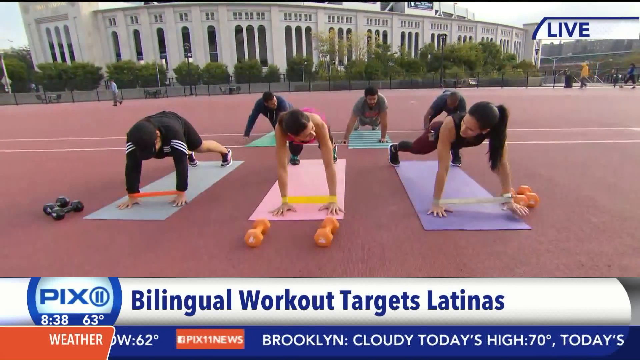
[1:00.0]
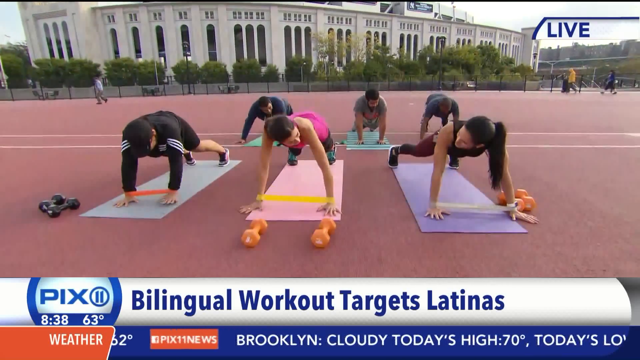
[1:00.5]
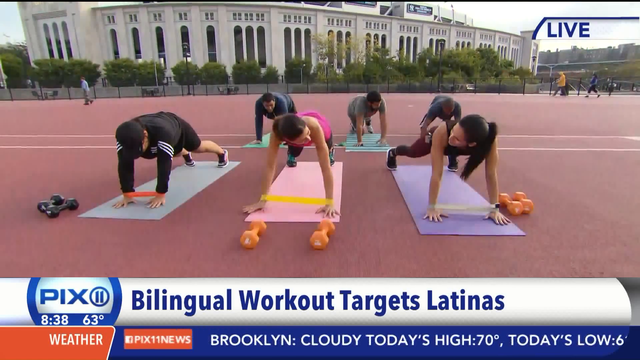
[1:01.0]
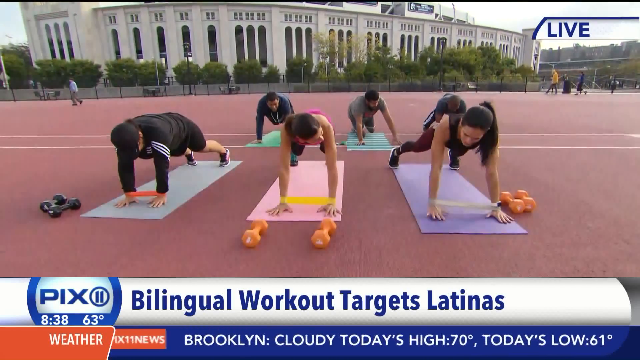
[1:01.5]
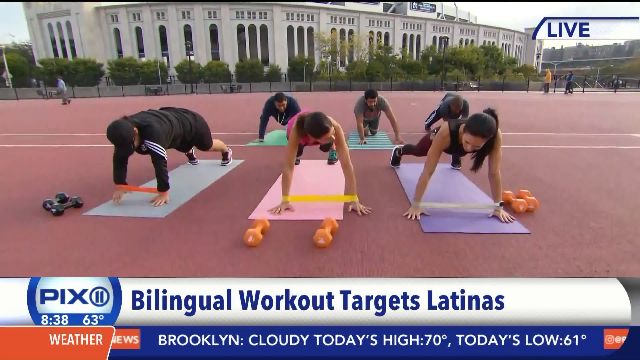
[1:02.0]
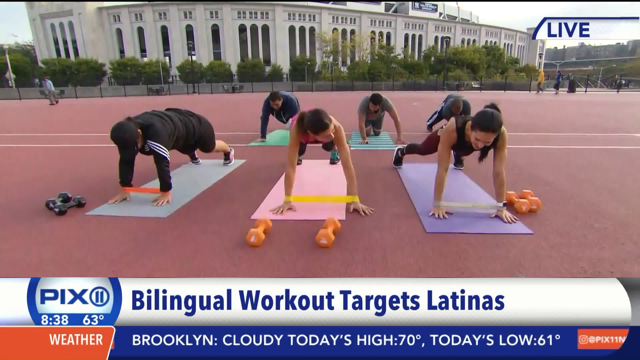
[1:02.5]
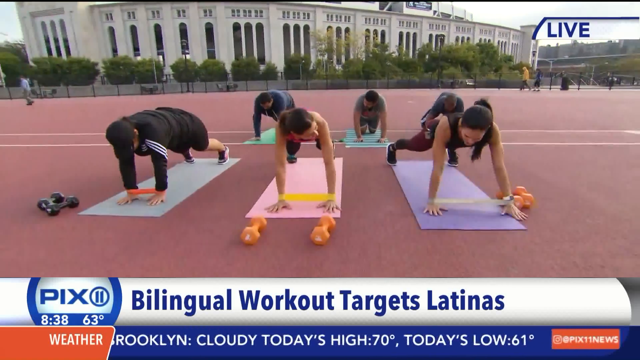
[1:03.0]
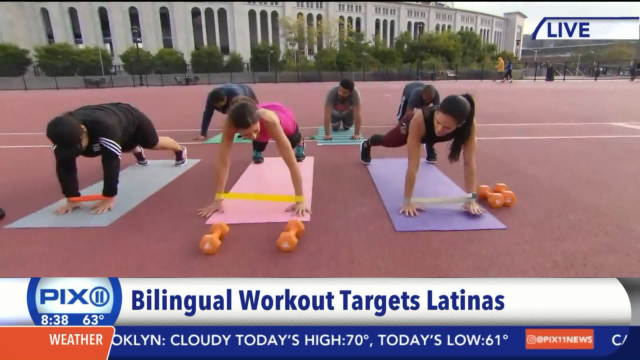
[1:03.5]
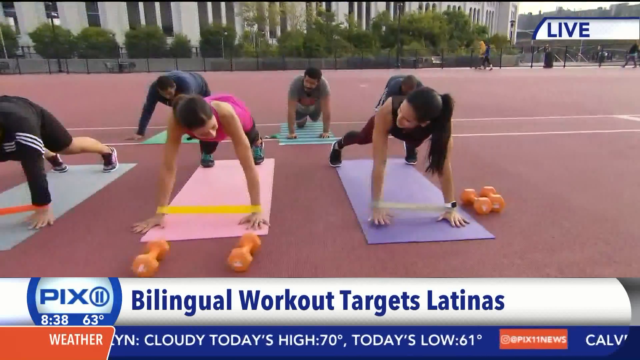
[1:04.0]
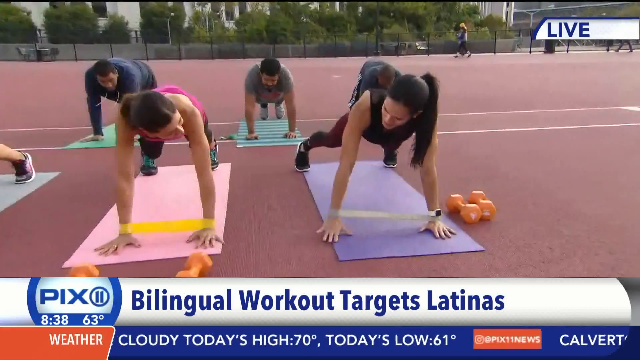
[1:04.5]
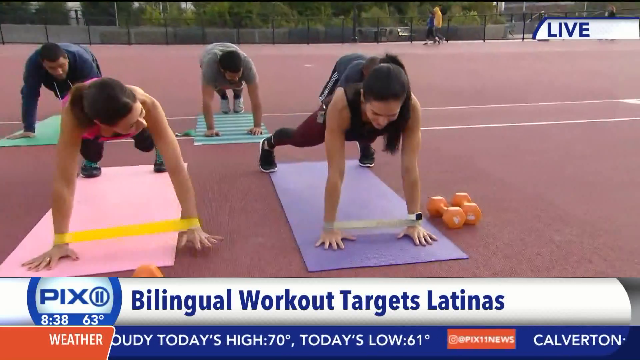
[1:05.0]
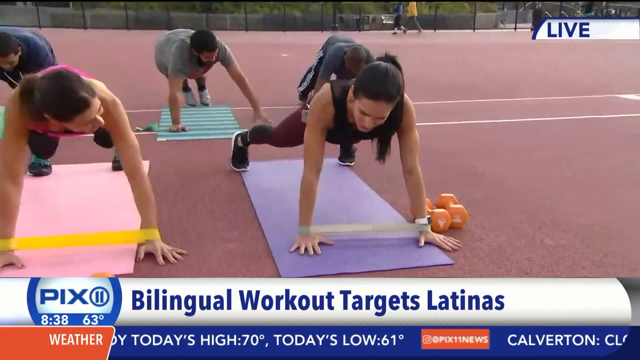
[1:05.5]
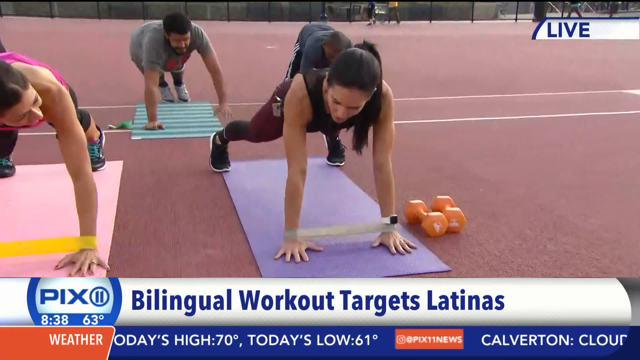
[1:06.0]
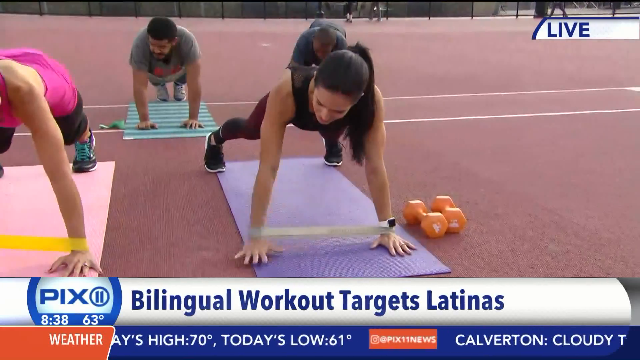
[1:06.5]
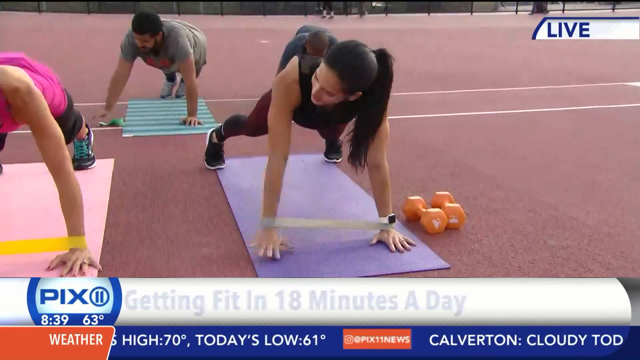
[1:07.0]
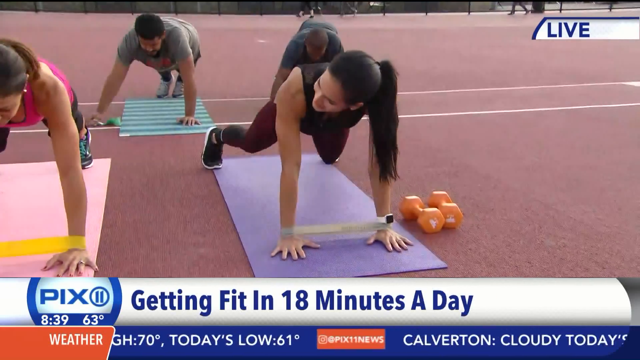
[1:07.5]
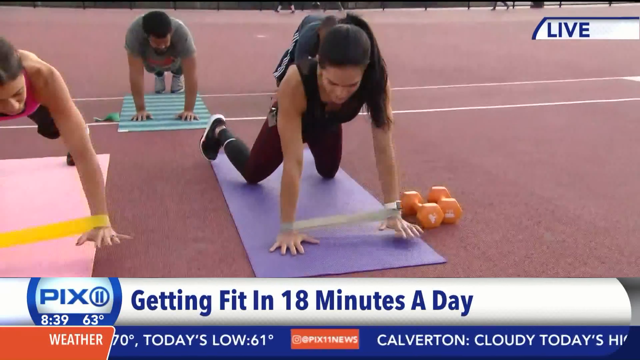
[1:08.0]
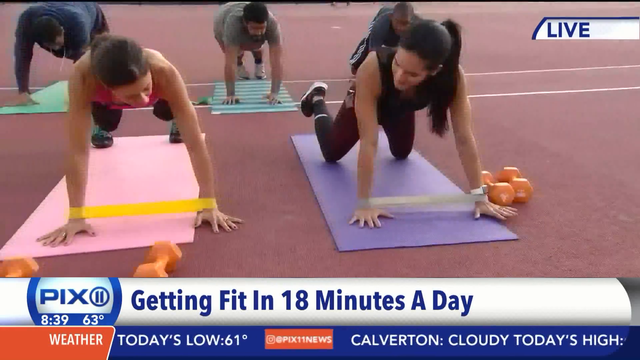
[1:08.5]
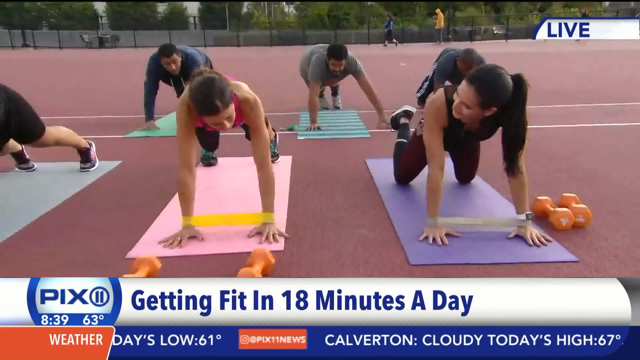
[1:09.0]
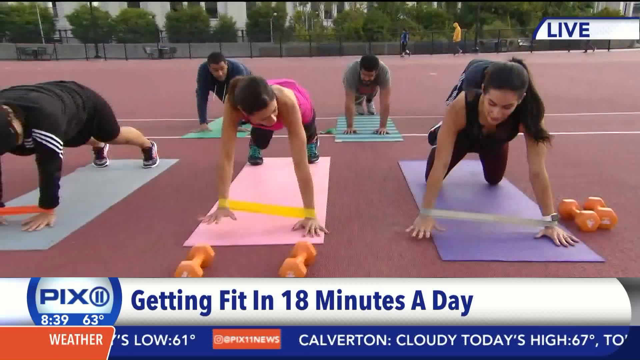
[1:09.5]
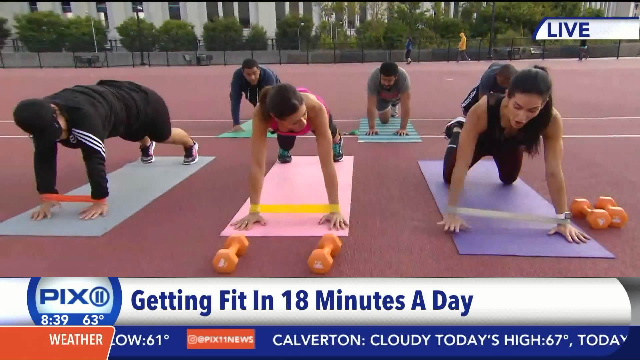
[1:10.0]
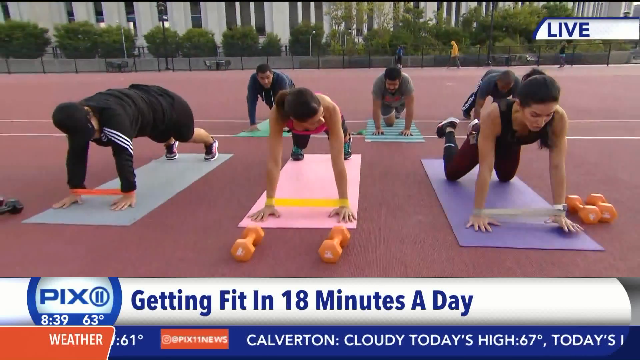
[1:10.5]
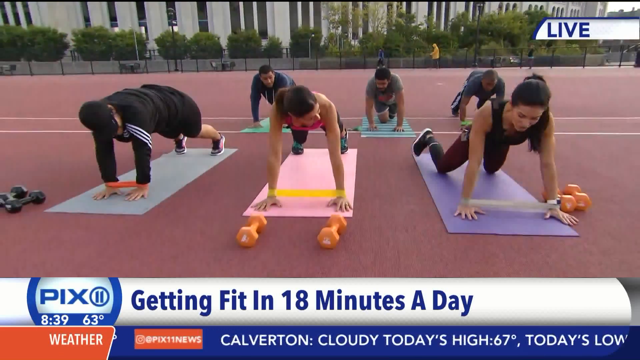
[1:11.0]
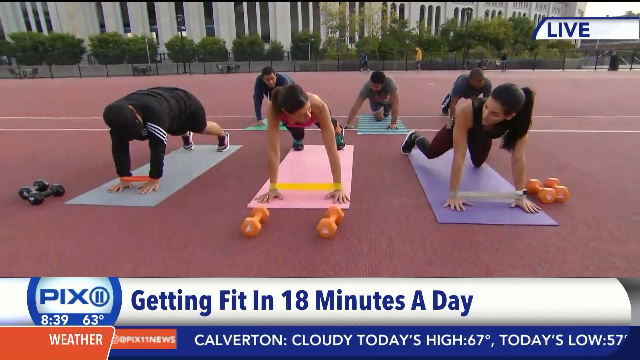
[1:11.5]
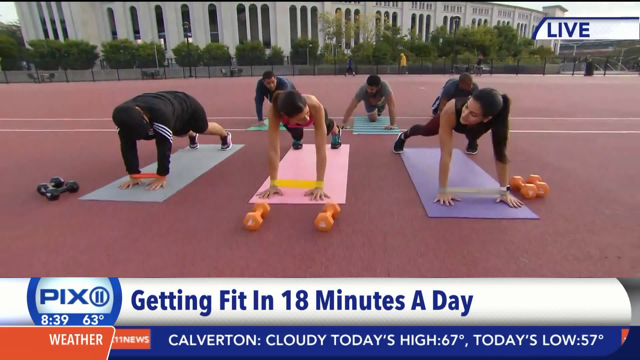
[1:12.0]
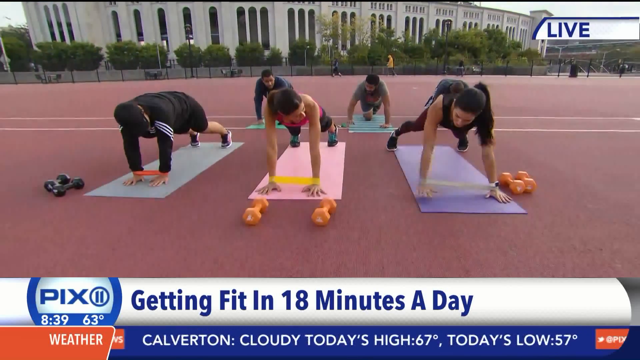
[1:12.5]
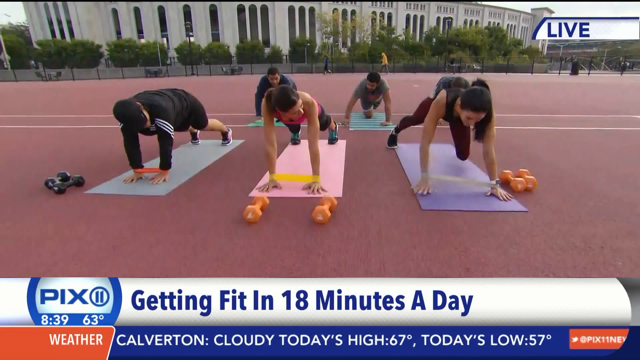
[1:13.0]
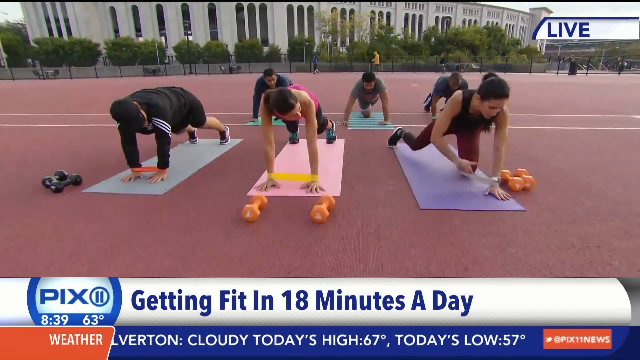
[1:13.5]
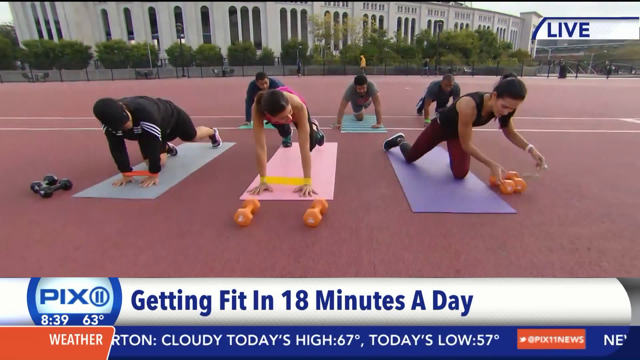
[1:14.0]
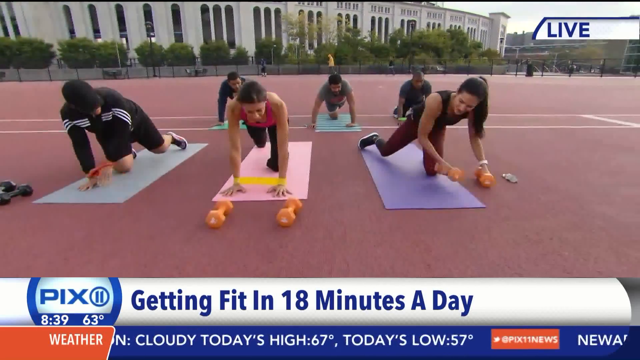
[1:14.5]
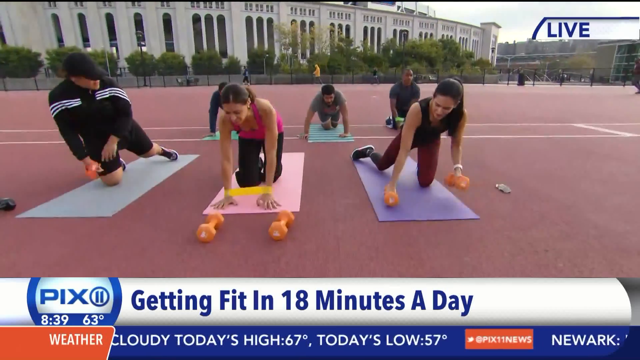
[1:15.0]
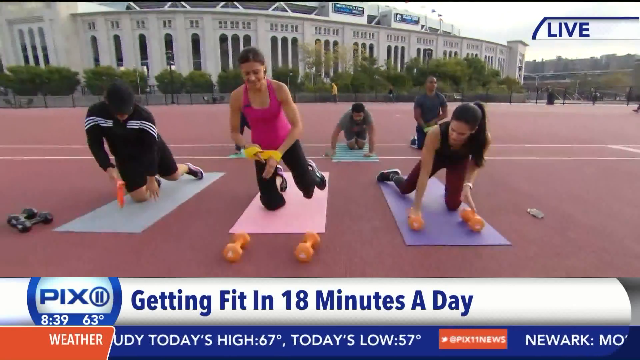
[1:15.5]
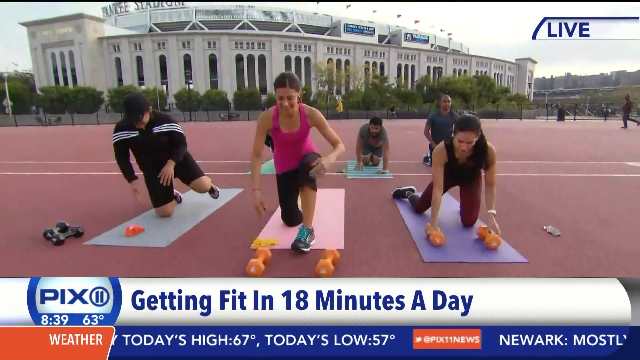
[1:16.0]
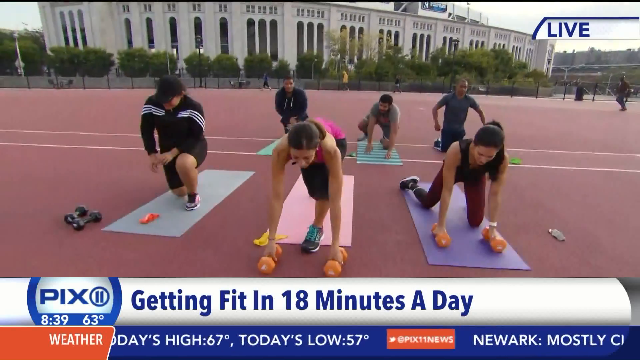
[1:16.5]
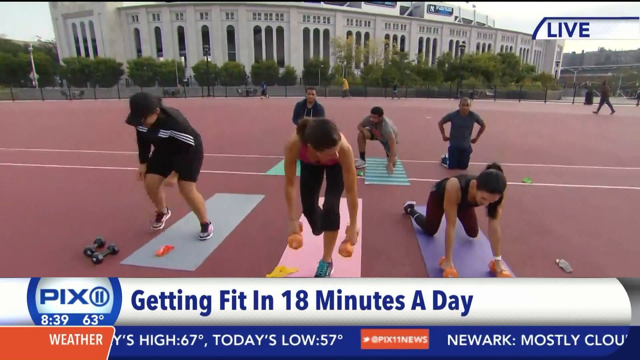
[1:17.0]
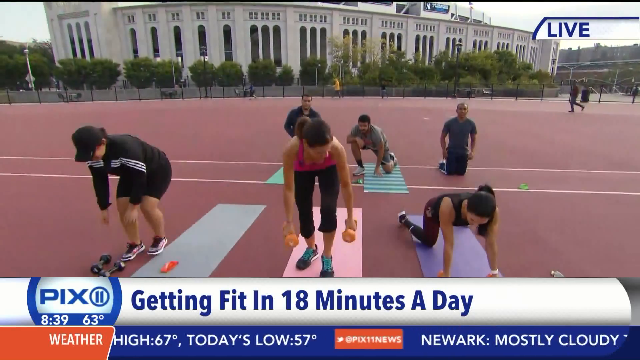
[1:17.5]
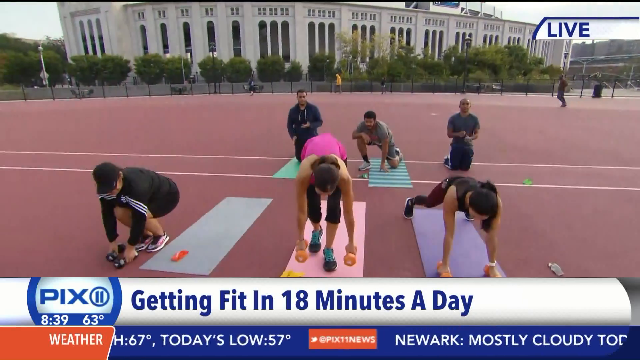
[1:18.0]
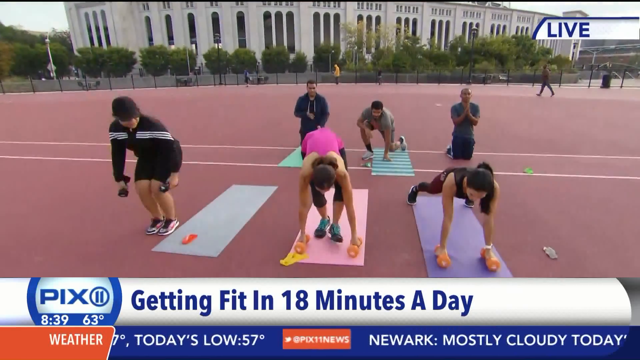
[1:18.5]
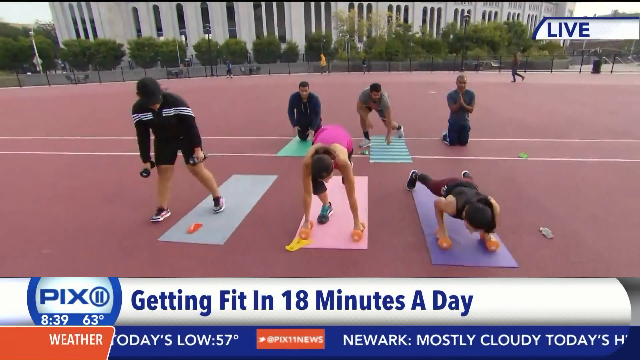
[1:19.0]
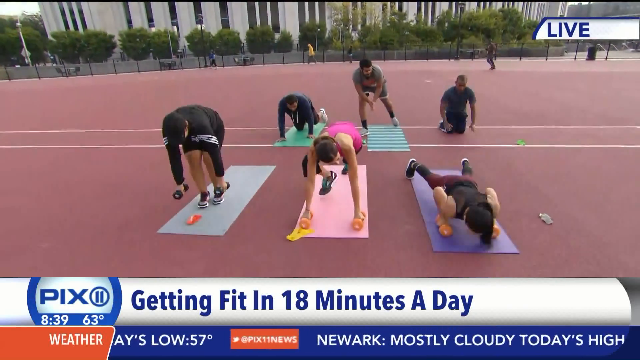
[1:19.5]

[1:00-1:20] Elisa and her companions continue, with the camera focused on her companion on the left. They do bending exercises using elastic bands of different colors, moving the bands from right to left. The exercise then changes: the elastic bands are put aside and a new movement begins, first standing and then on the ground, apparently because Elisa initially misunderstood the exercise and only later realized it was done on the ground. Elisa and her companions then do the exercise together, which seems to be a continuation of the earlier bends, using dumbbells.